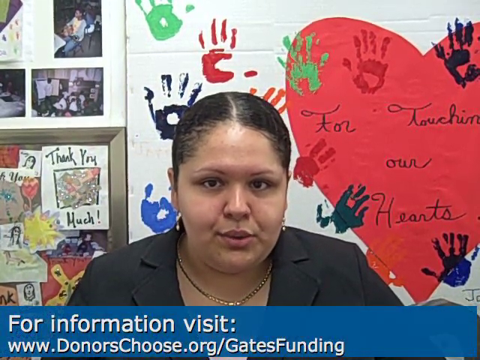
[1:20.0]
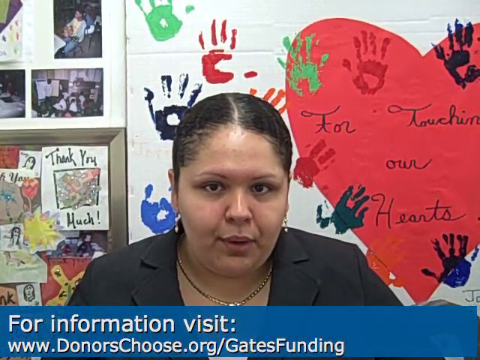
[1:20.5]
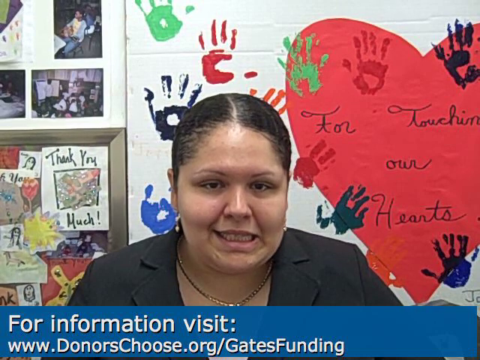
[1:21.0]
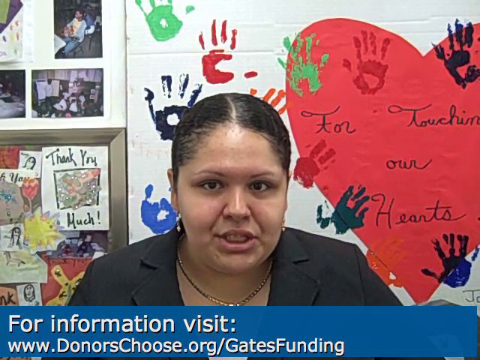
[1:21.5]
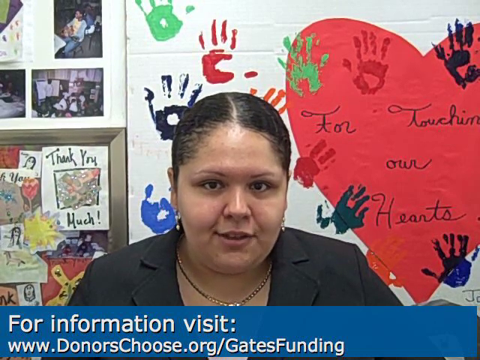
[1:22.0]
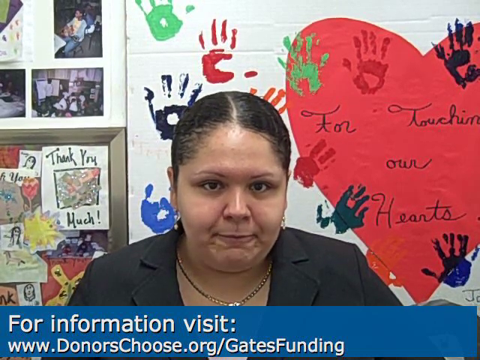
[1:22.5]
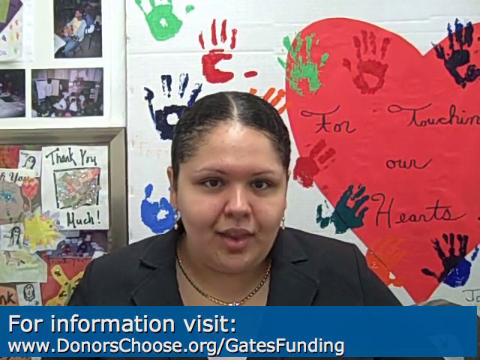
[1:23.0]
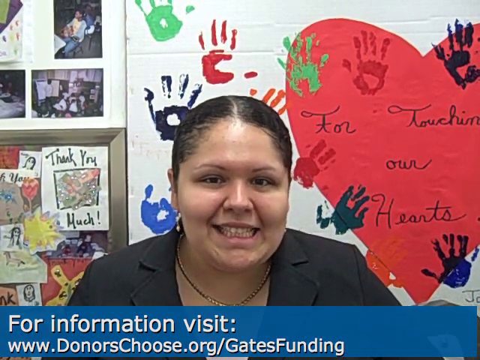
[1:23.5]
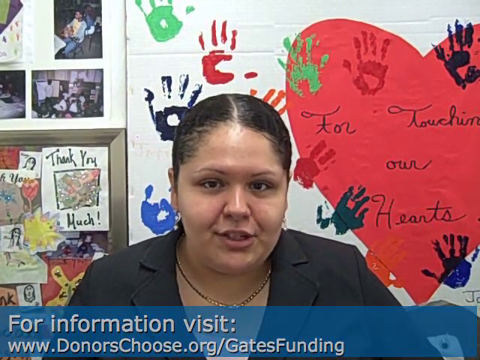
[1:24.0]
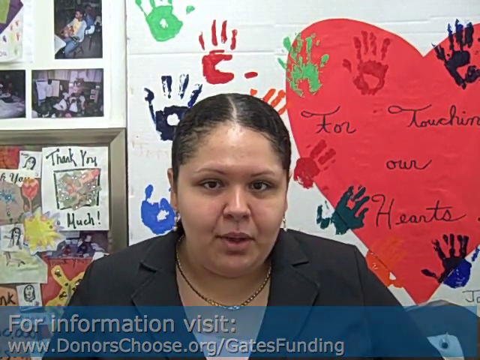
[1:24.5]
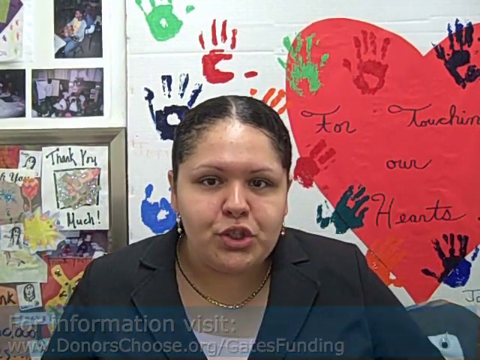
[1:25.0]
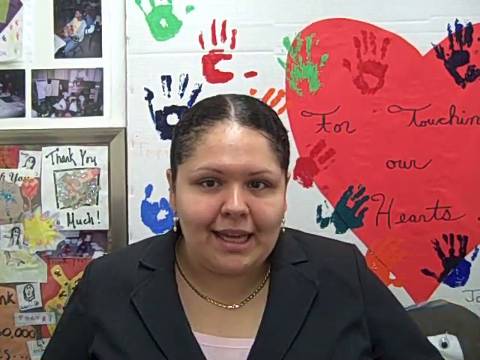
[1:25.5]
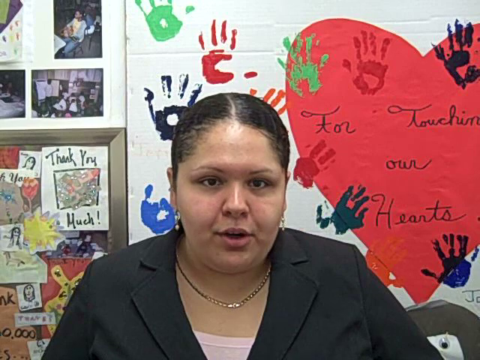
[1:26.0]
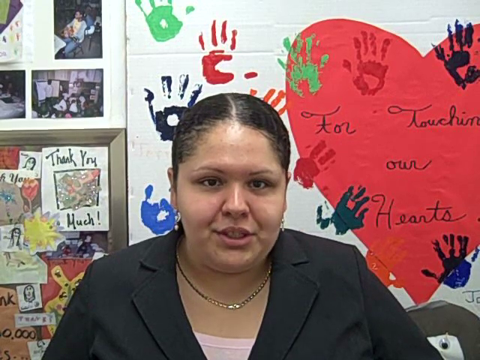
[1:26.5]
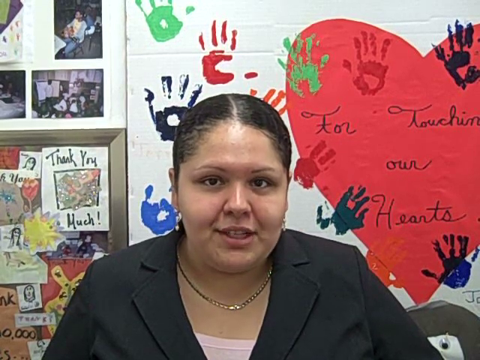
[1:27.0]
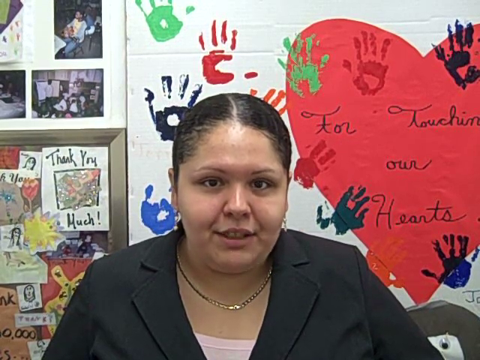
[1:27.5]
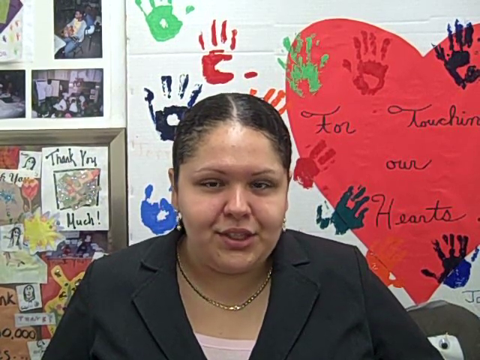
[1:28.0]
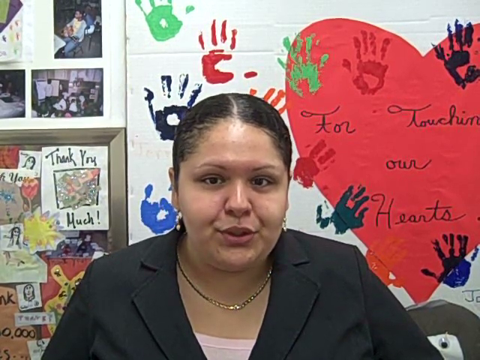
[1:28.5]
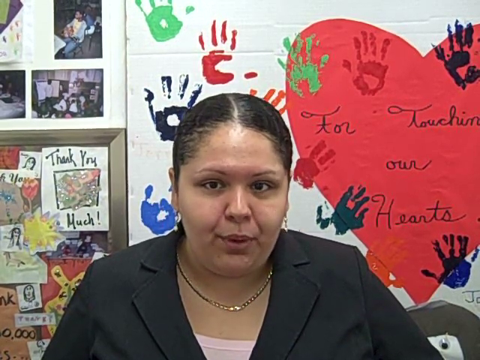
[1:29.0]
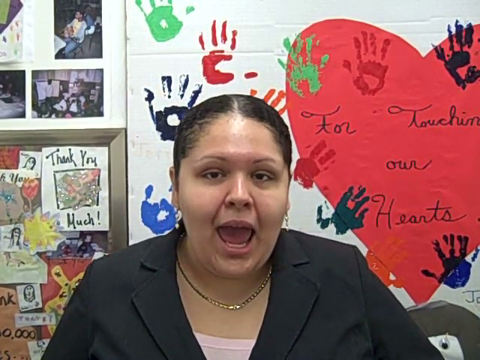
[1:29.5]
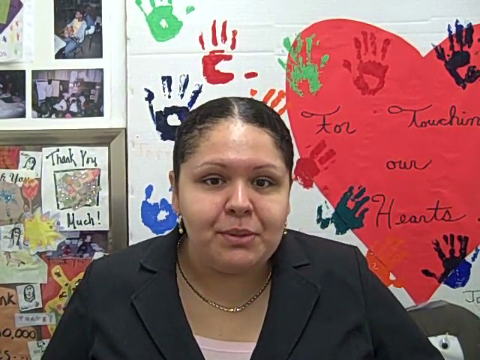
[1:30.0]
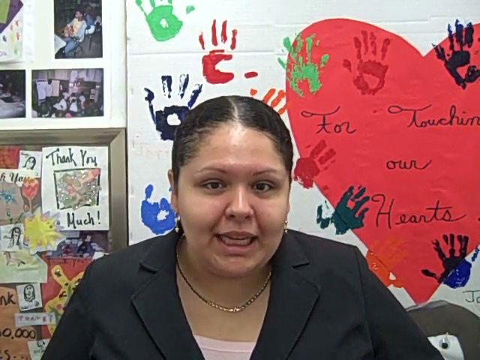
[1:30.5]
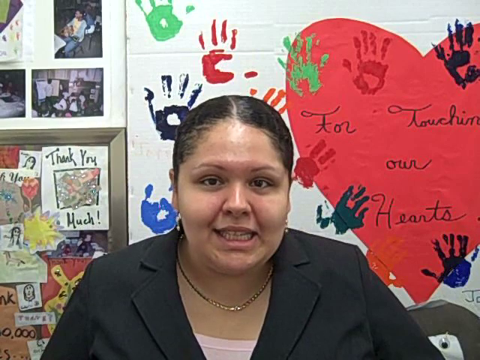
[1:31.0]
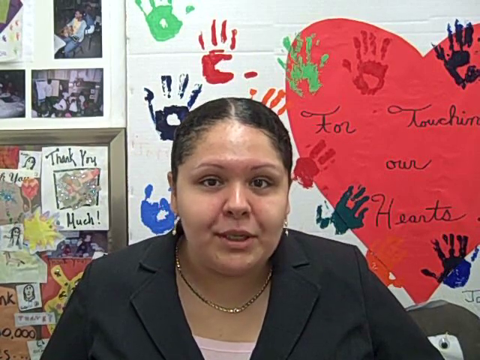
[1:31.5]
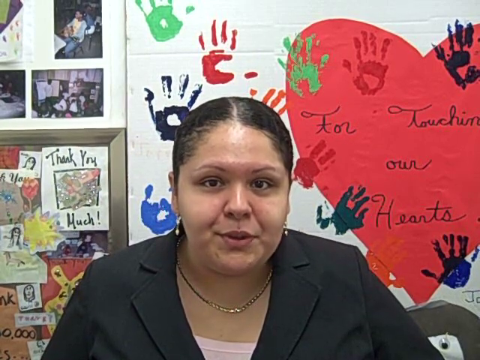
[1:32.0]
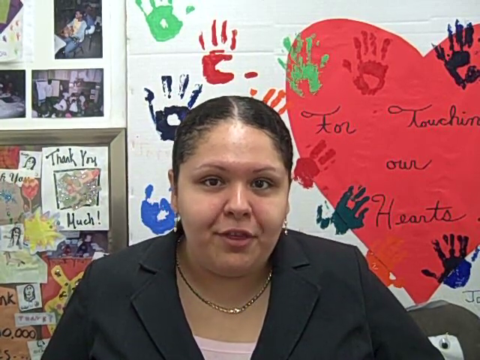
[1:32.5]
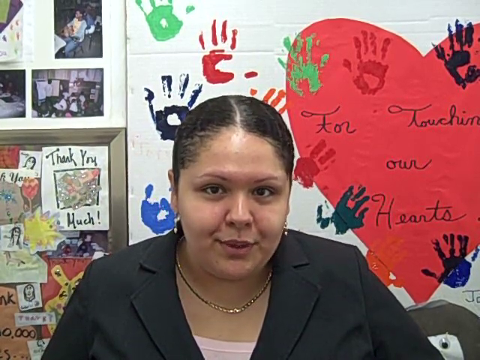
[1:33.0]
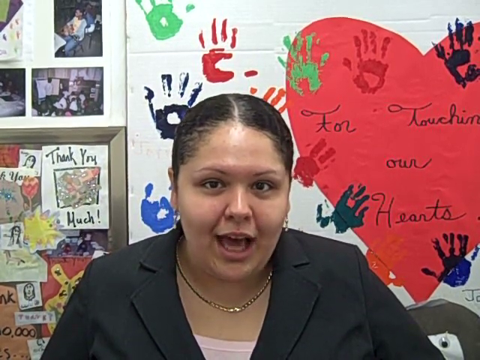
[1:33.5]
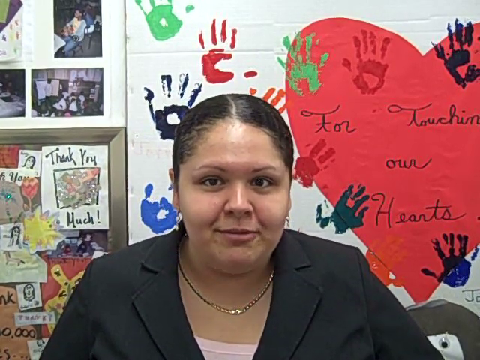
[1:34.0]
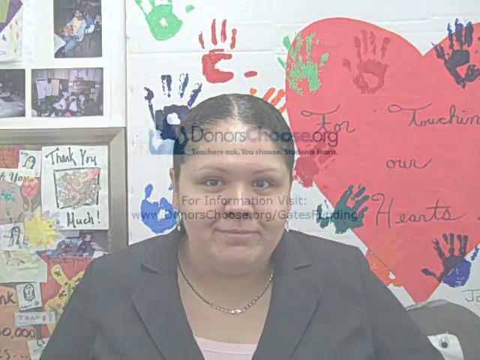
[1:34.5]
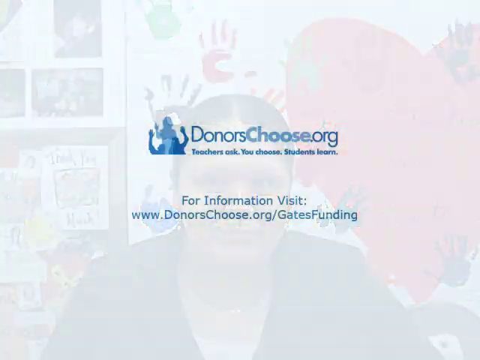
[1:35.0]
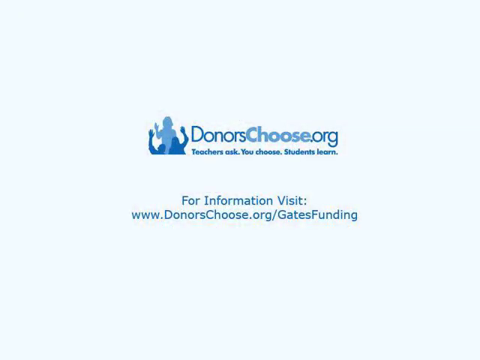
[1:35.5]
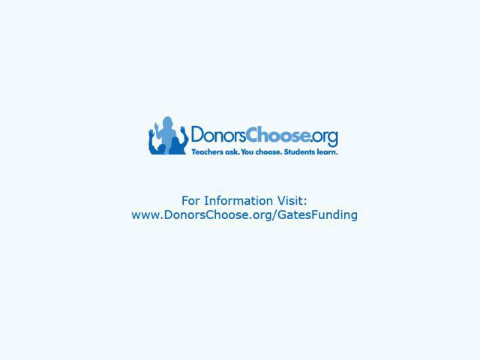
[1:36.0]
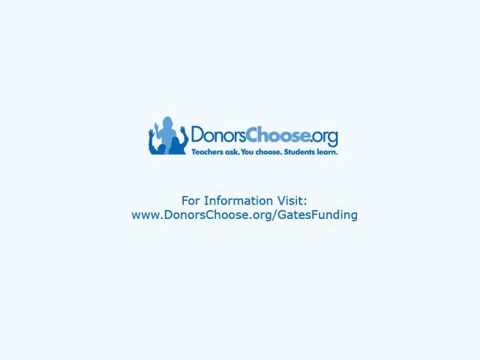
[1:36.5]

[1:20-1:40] A woman sits in her office, wearing a black blazer with some kind of white shirt underneath, a golden necklace and silver earrings. Behind her is a lot of artwork, probably made by students or maybe people she helps. The biggest piece is a paper heart with text on it, surrounded by different kinds of colorful handprints. On the left is some kind of board with smaller and bigger drawings; the biggest is a drawing that says "Thank you much", with colorful flowers on it. At the top of this board is some kind of picture collection that is hard to make out; one picture shows a man sitting in a chair and another shows a class of some kind. The screen fades to a graphic of the site donorschoose.org saying to visit "www.donorschoose.org/gatesfunding" for information.